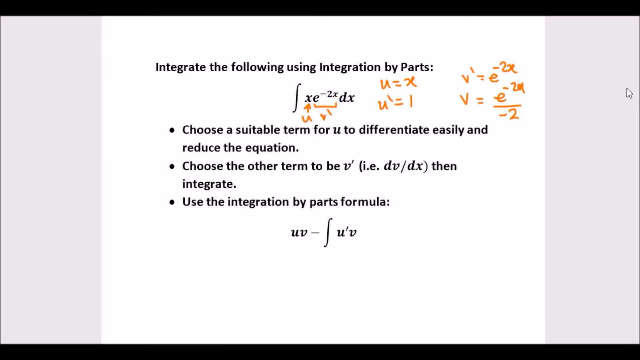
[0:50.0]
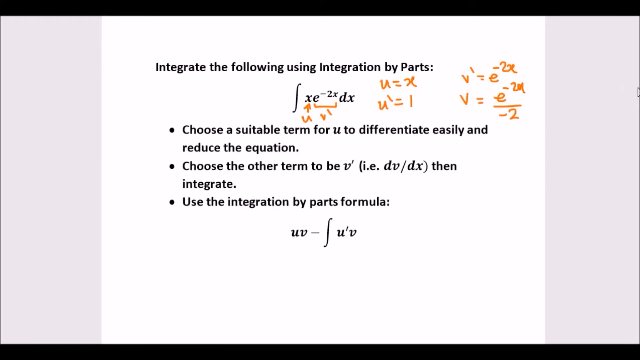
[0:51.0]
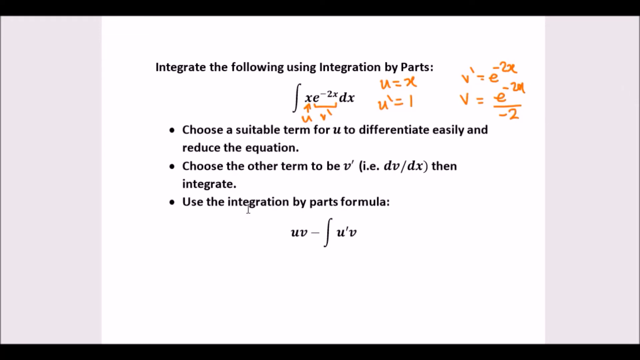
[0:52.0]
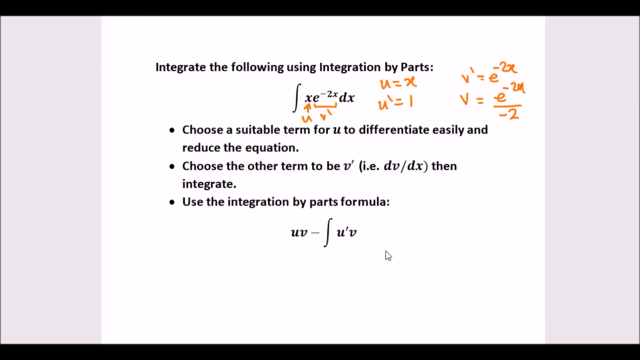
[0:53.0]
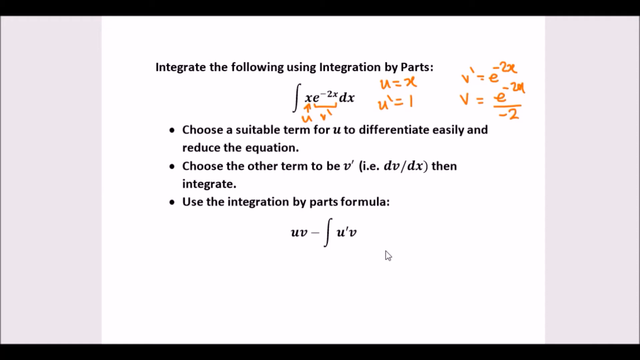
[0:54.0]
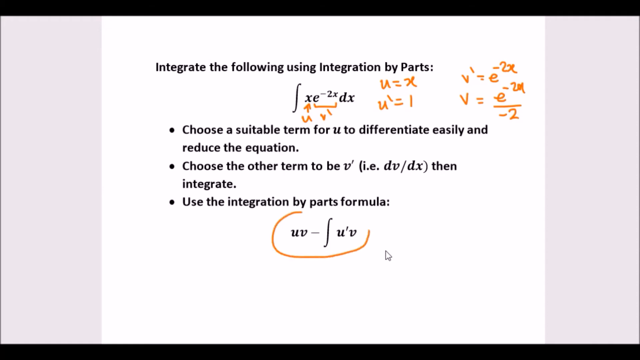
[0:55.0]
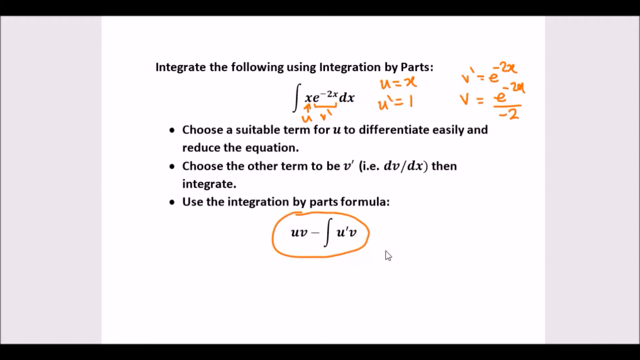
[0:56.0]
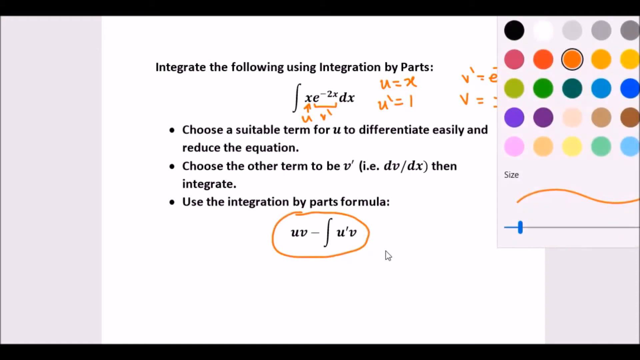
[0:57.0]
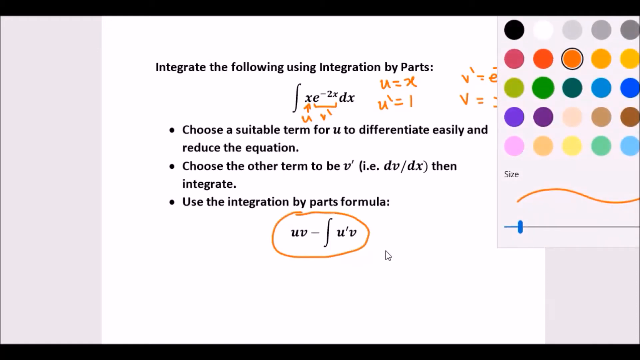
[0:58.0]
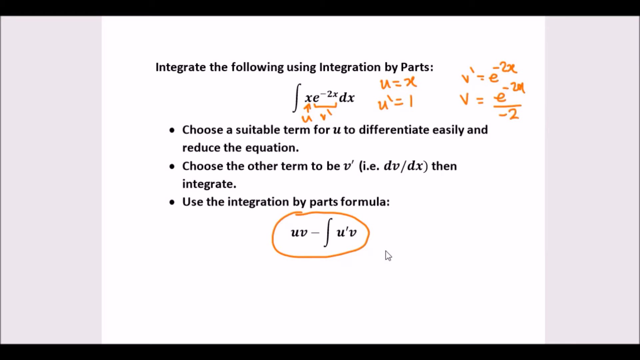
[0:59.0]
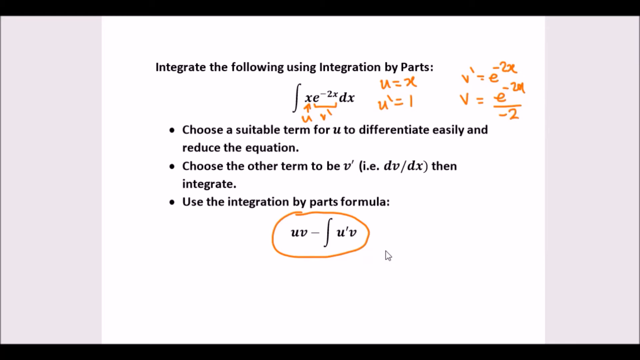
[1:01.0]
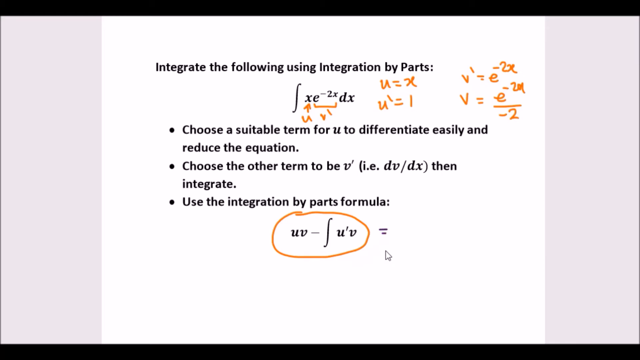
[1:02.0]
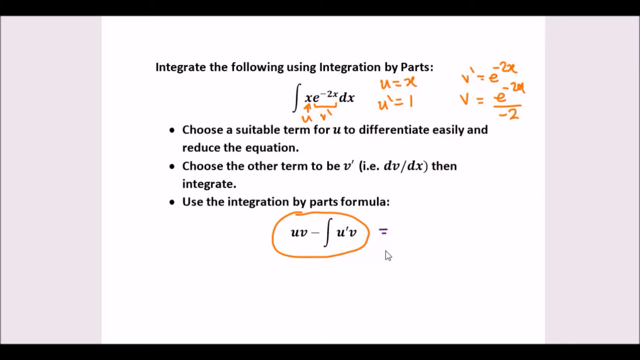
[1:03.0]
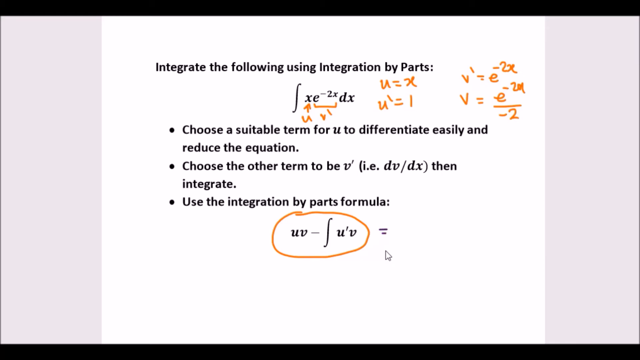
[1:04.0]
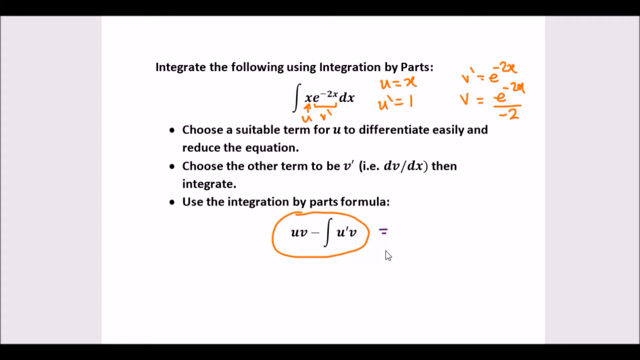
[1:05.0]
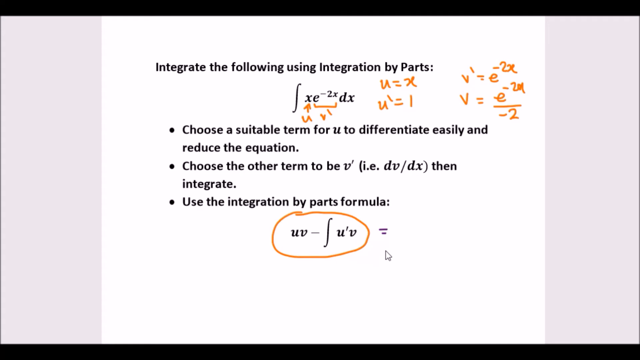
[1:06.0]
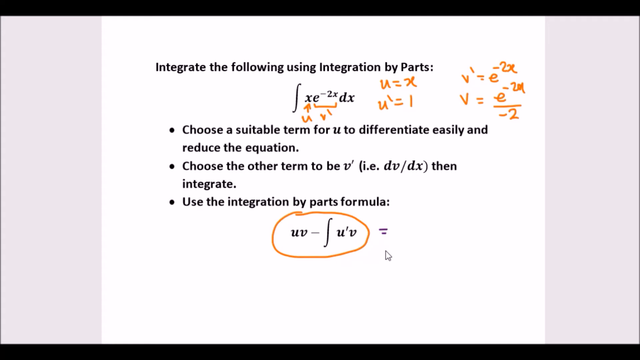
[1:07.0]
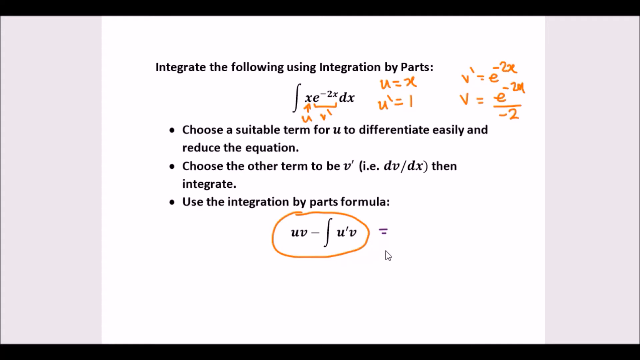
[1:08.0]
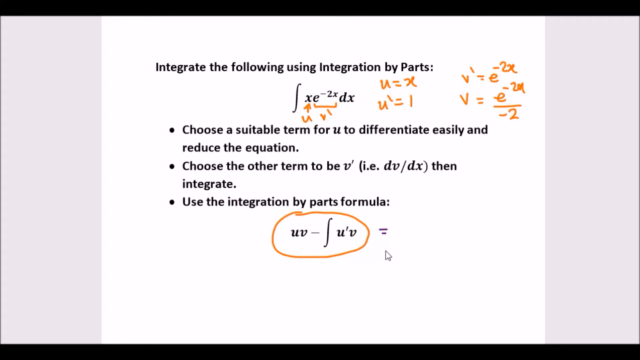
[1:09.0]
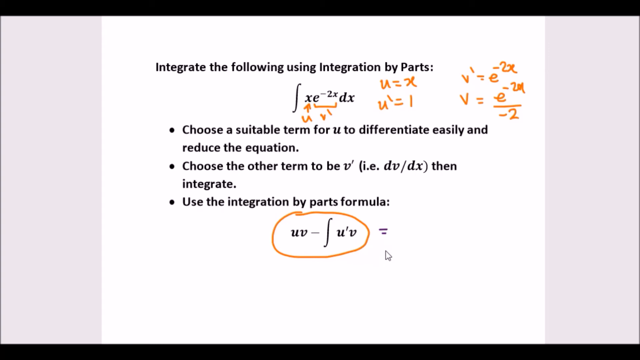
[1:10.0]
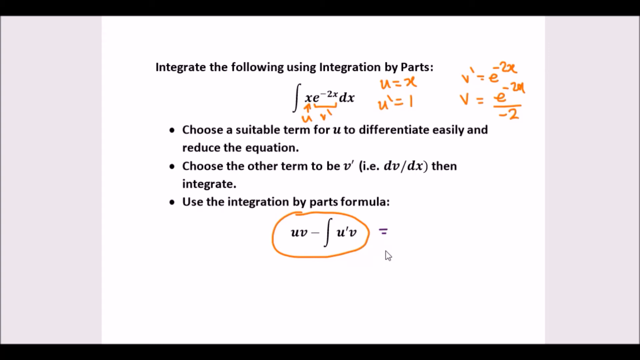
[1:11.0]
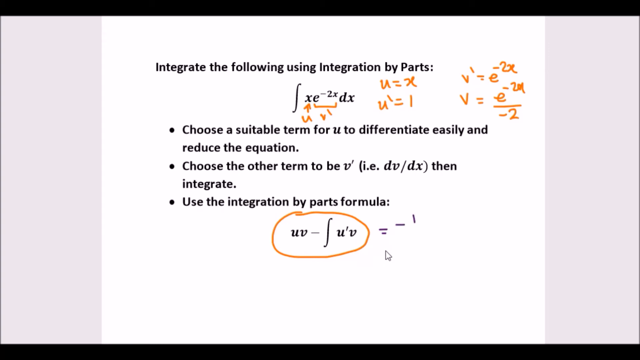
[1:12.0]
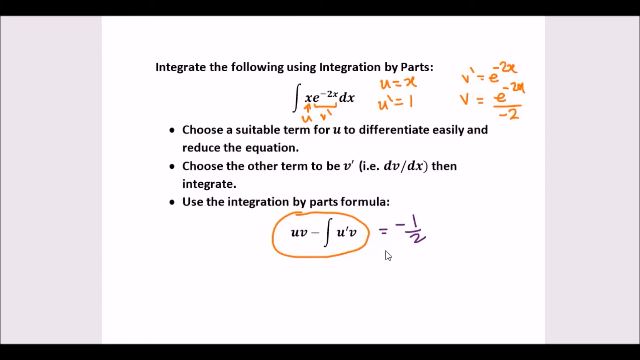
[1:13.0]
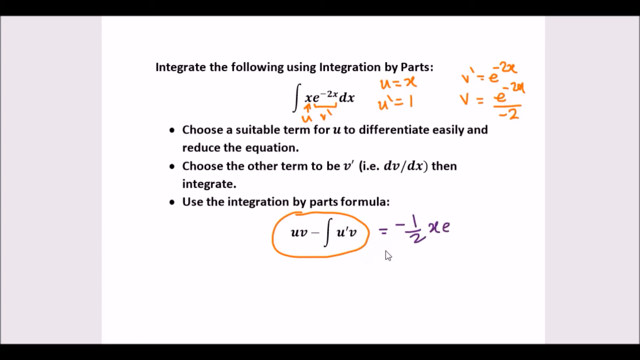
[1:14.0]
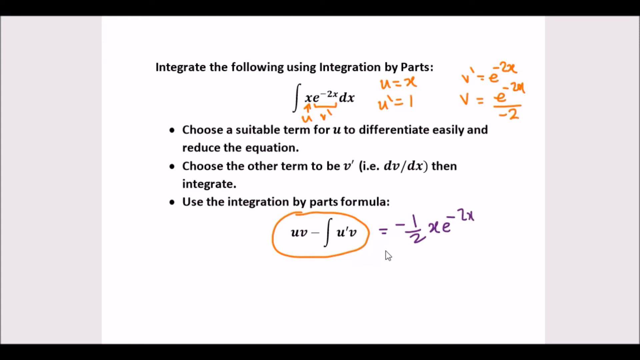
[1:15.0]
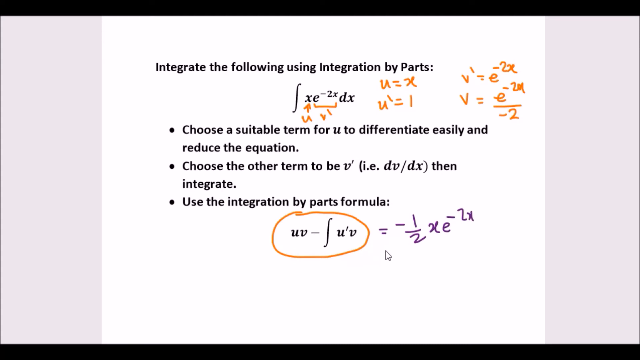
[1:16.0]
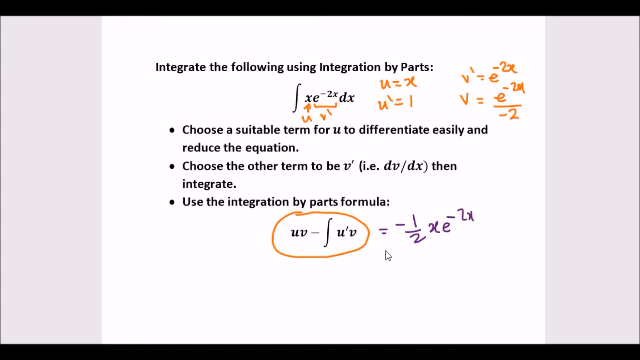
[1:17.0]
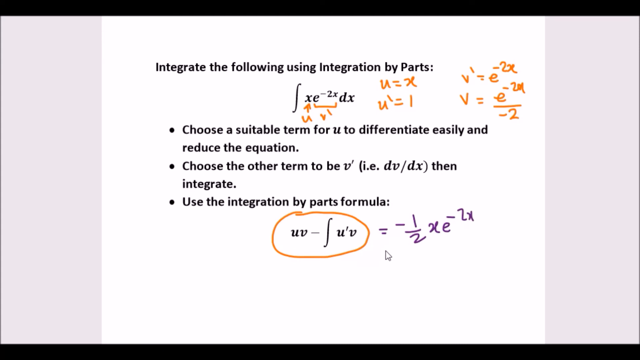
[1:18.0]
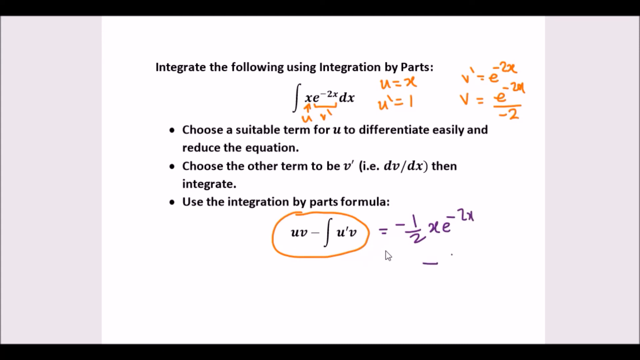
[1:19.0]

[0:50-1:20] The user focuses on the second formula on the slide, which reads uv minus the integral of u' and v, and circles it in orange. A menu of colors to draw with opens on the right; orange is selected with a small thickness. The user switches to navy blue and begins writing that the formula equals minus 1 over 2 times x times e to the minus 2x, followed by a subtracted integral, but the video cuts just before it is written.